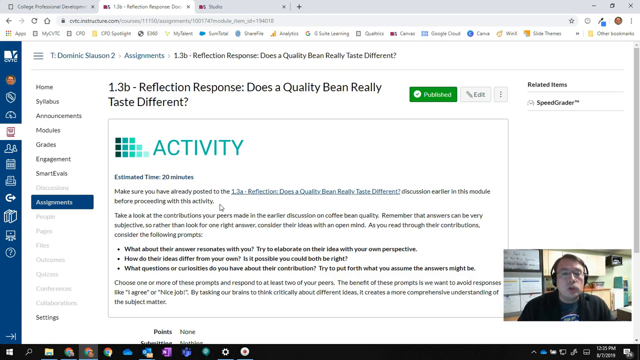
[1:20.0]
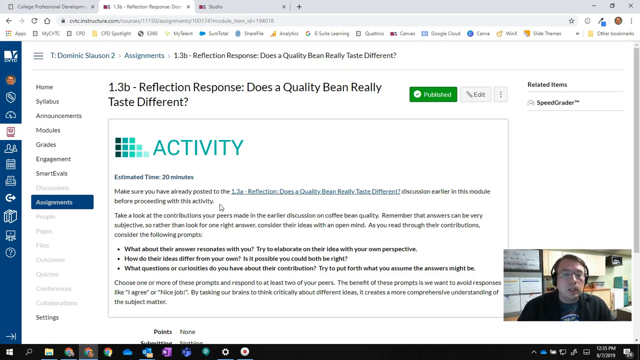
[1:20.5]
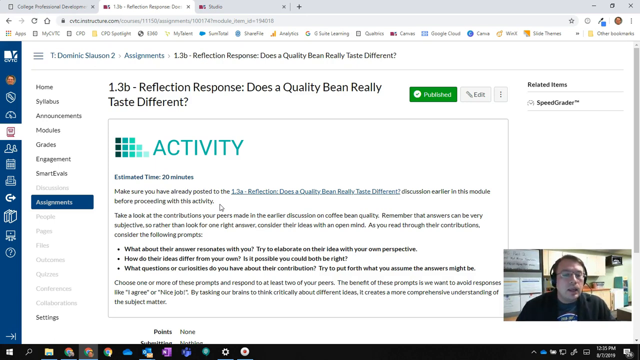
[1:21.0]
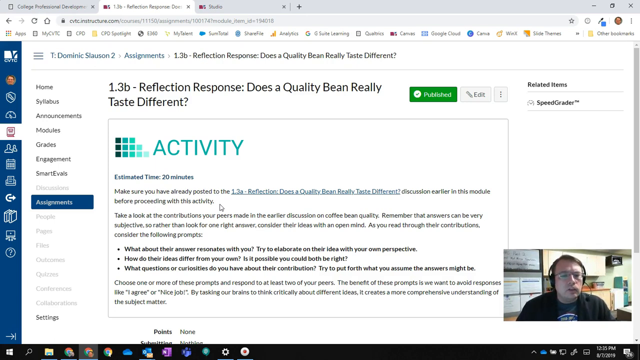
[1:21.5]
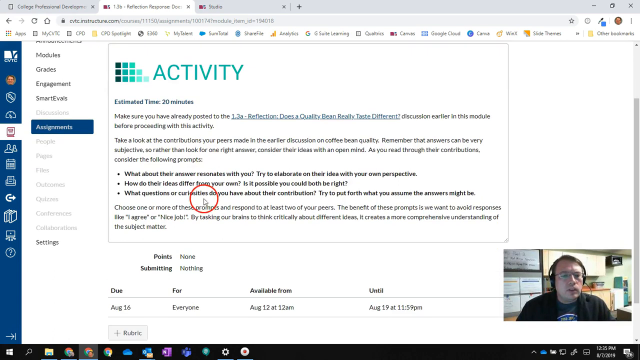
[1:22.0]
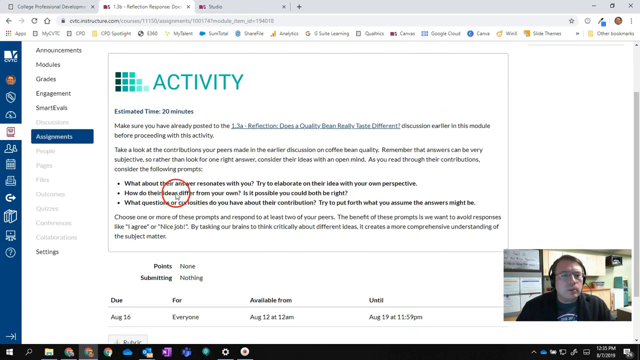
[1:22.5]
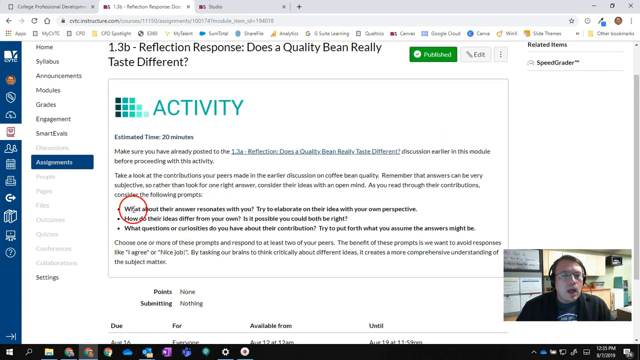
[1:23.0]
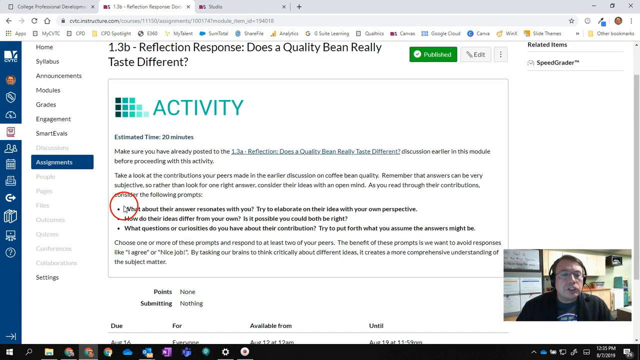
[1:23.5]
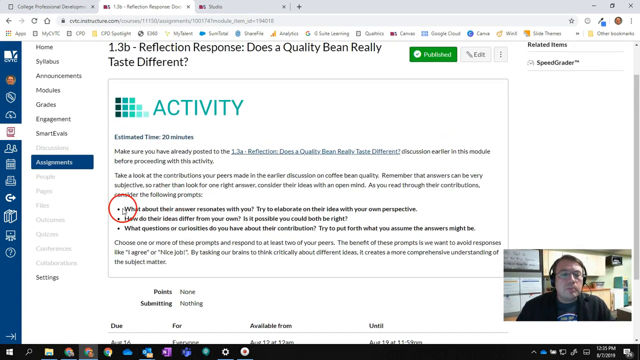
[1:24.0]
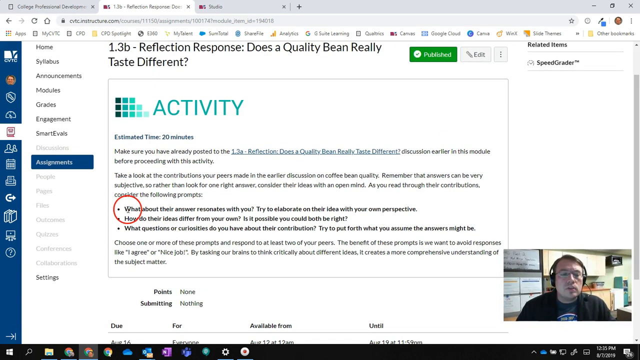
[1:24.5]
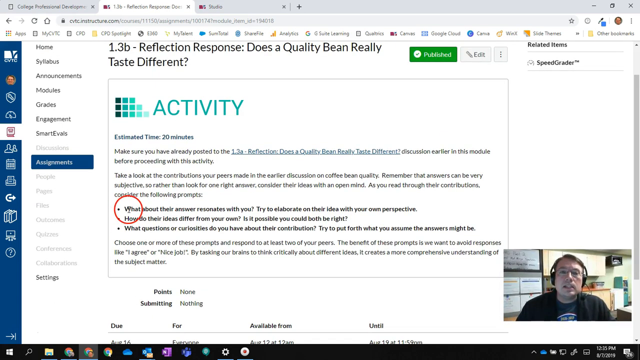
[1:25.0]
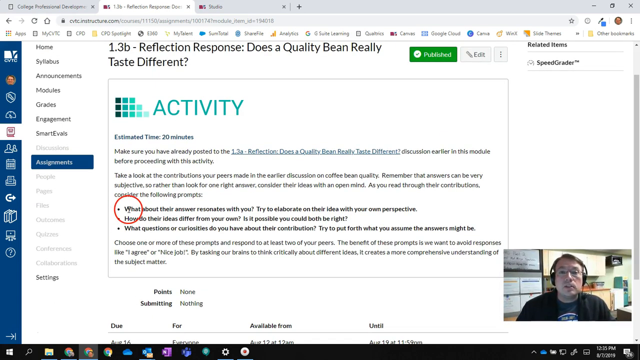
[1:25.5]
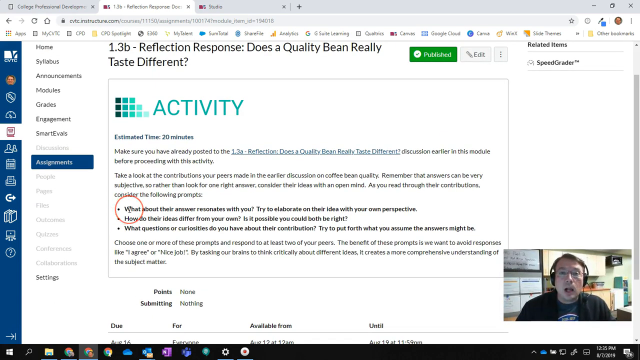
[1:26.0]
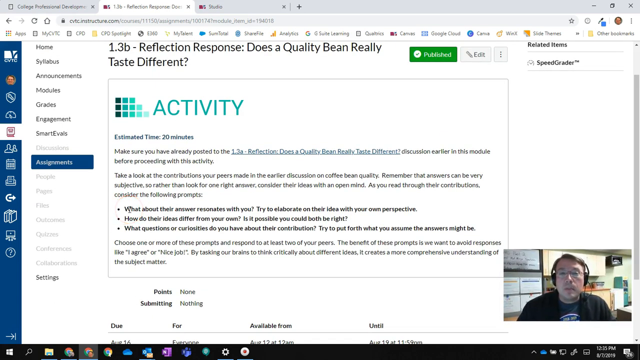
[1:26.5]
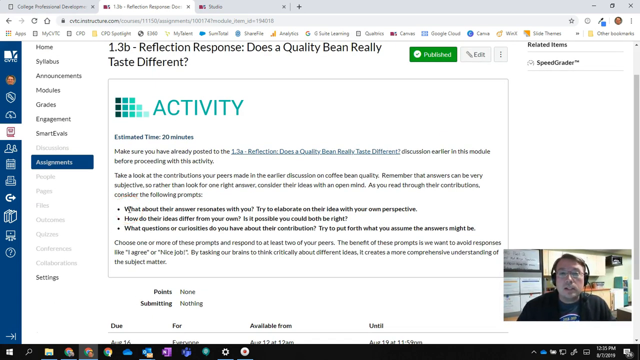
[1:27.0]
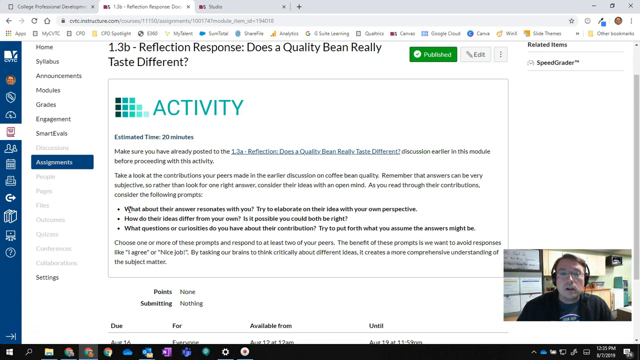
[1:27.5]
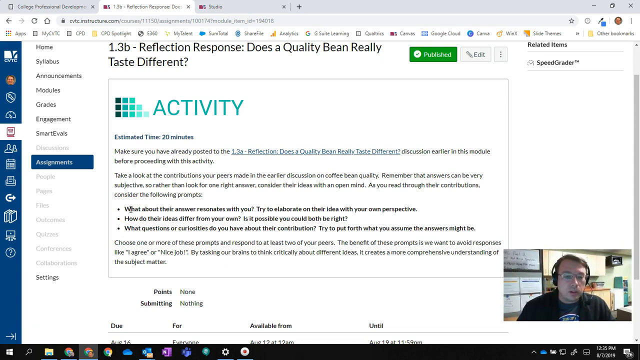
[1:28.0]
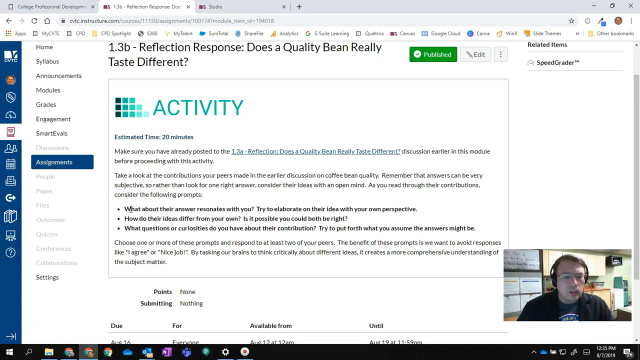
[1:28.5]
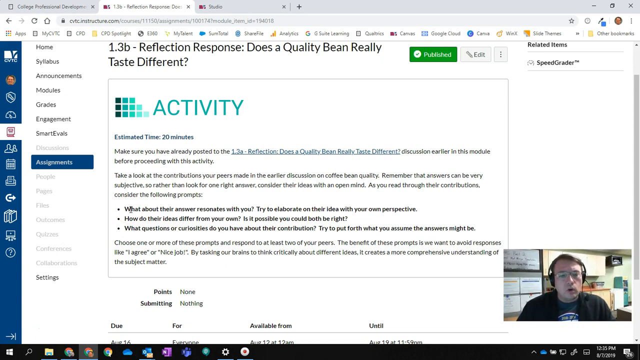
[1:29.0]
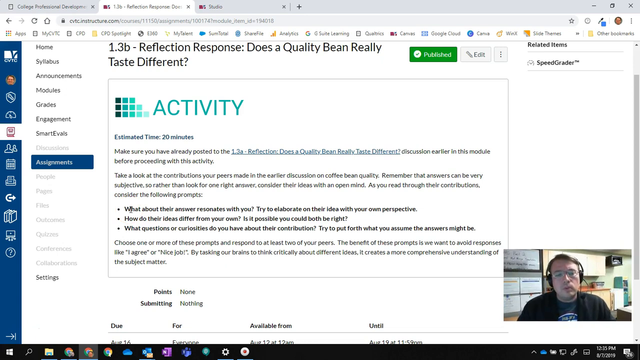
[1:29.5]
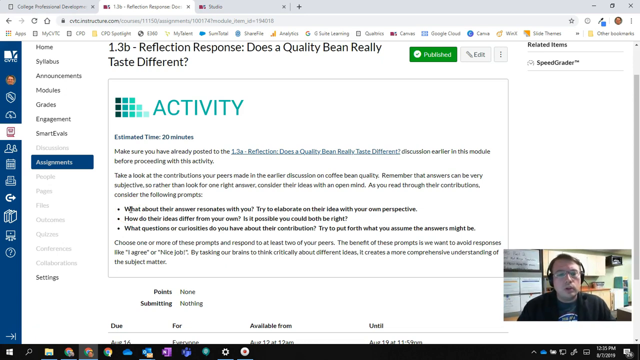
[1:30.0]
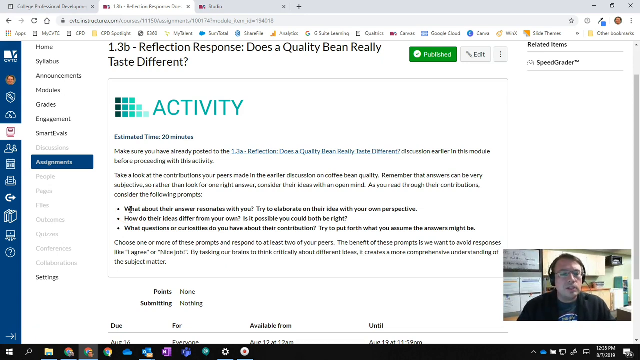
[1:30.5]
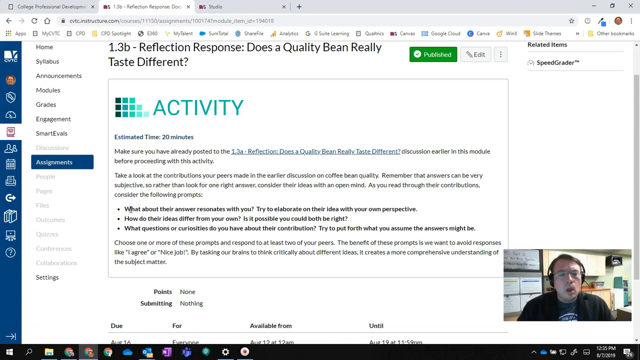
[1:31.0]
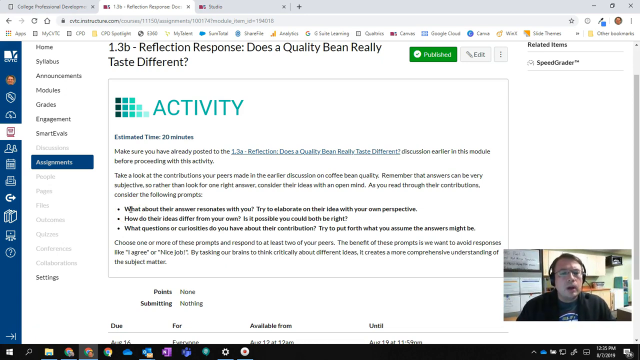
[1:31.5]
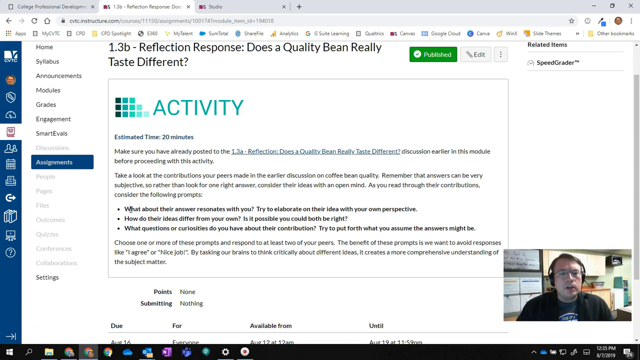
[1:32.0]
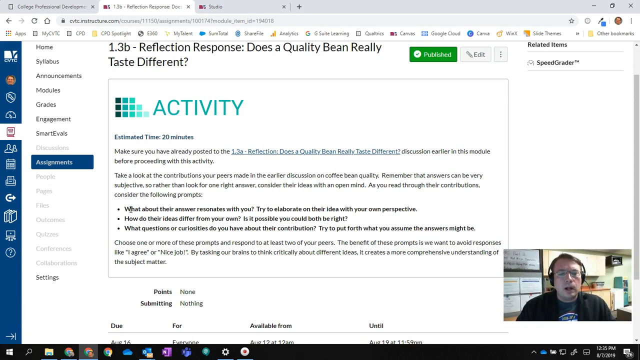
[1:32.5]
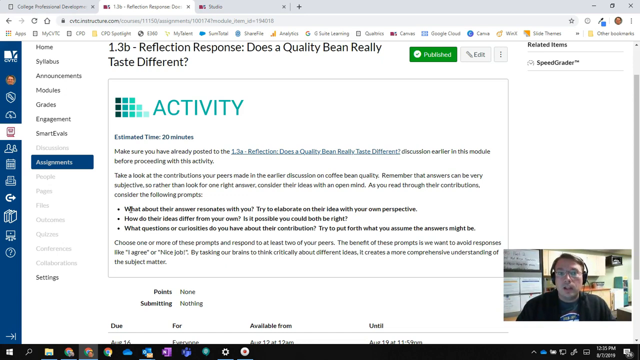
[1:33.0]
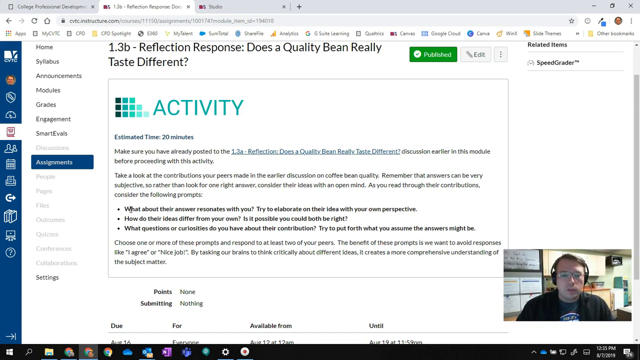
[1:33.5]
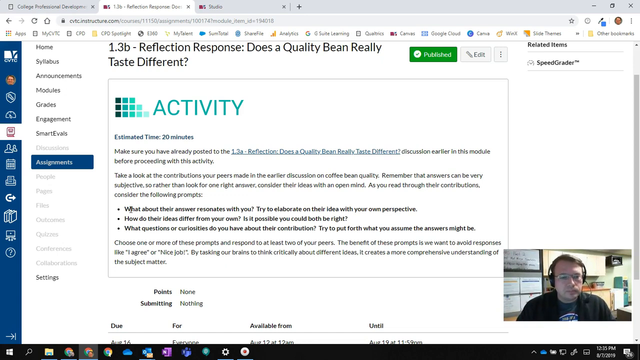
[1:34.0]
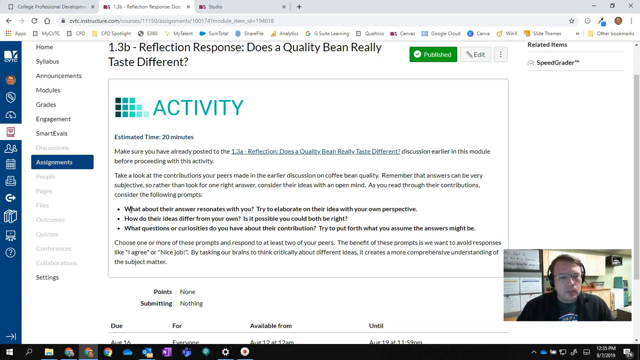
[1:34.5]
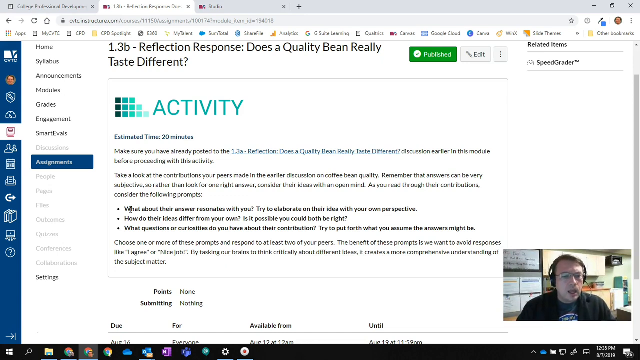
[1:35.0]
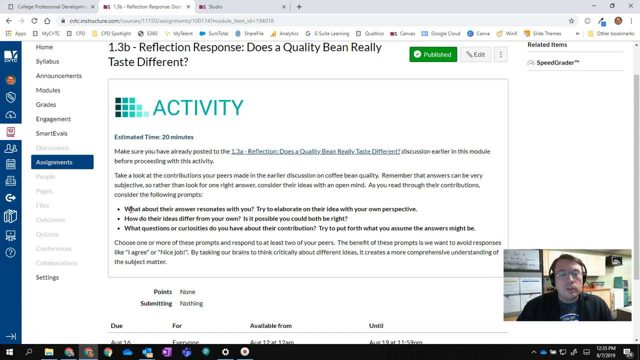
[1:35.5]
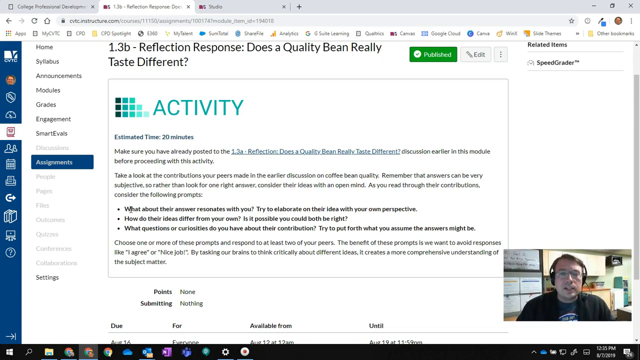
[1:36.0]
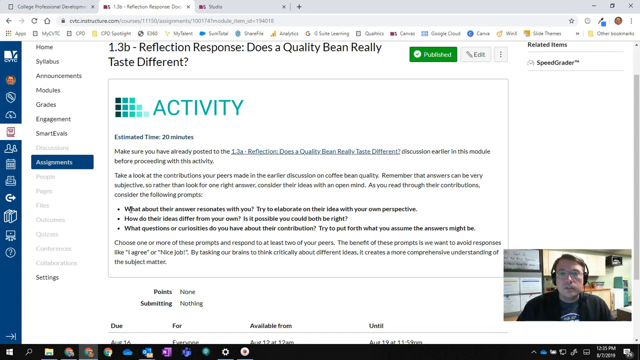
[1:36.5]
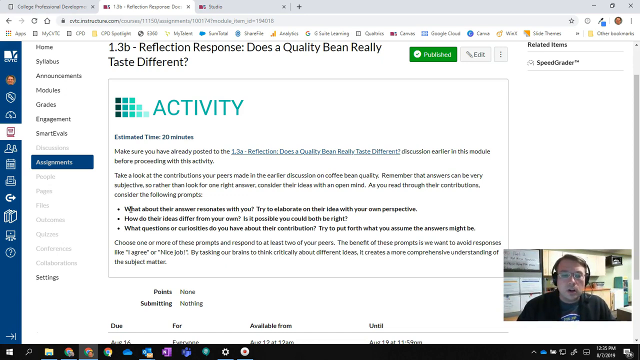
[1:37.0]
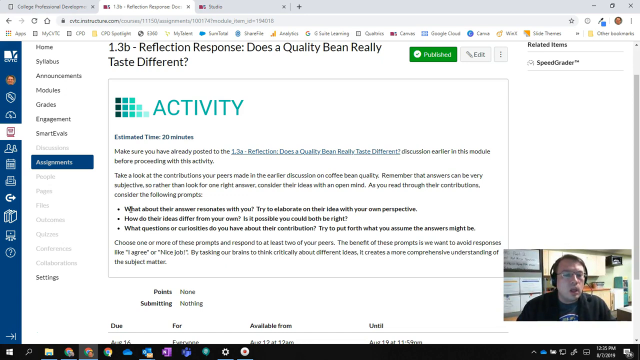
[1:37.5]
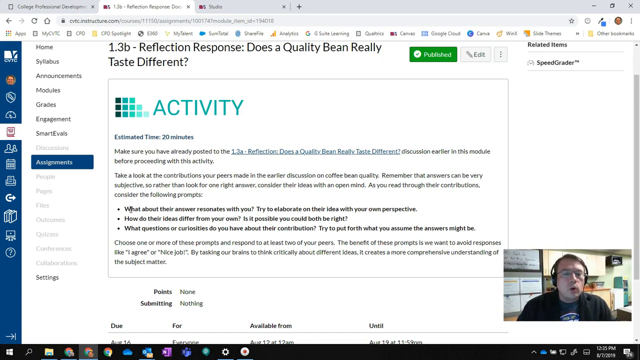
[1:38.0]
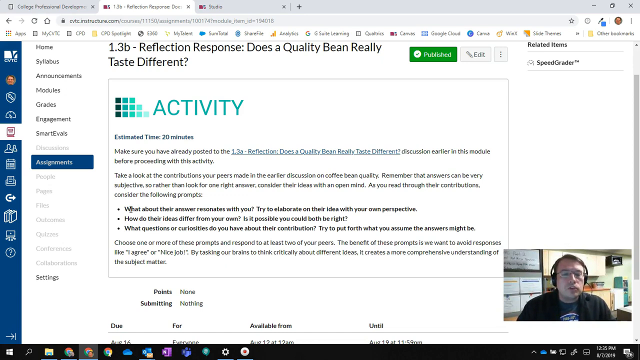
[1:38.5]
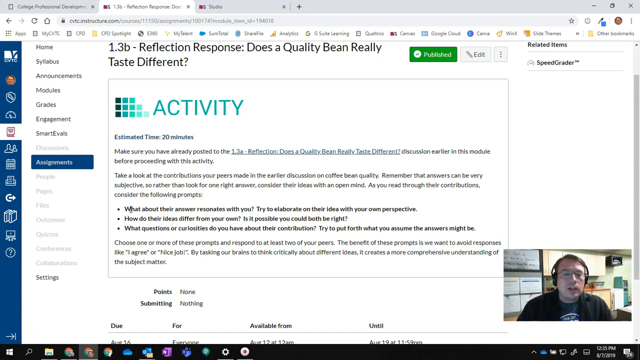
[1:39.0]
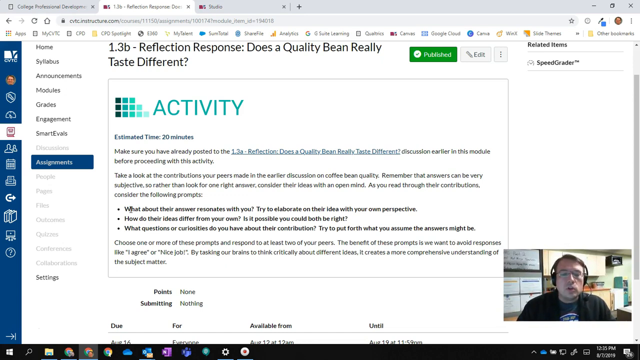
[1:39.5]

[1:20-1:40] A man sits in his office recording a video; in the background is a small kitchen with a small fridge and an orange closet. He wears glasses, a black blazer and a black t-shirt. He shares his PC screen, with the menu on the left side, and goes through the modules starting from 1.1, moving from one page to another. He seems to be an online tutor.